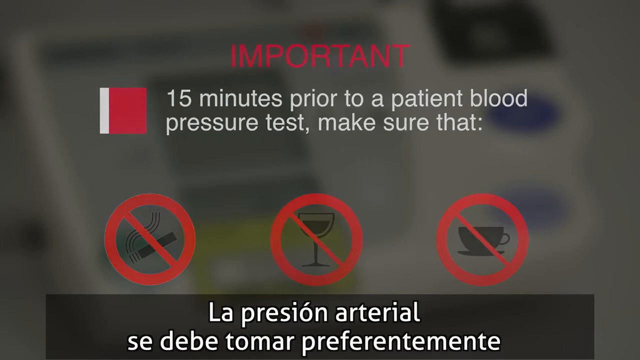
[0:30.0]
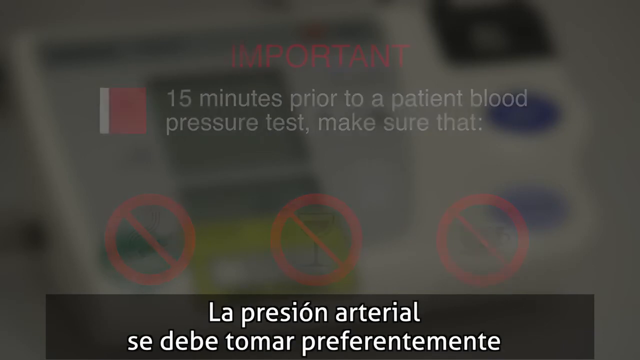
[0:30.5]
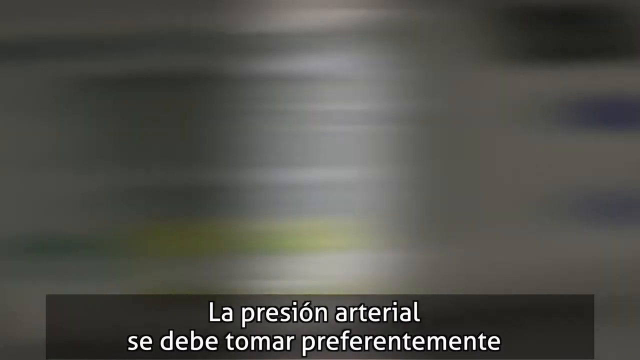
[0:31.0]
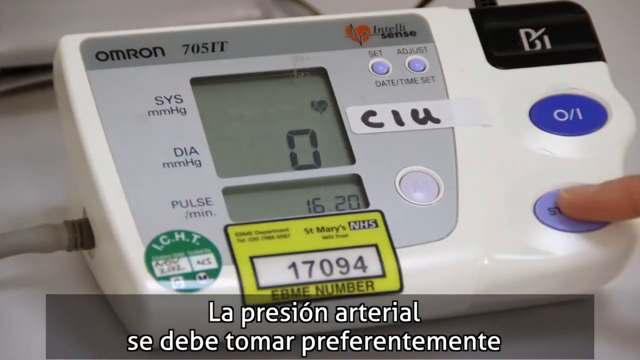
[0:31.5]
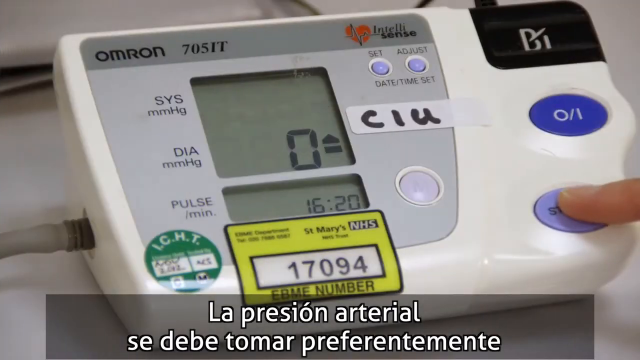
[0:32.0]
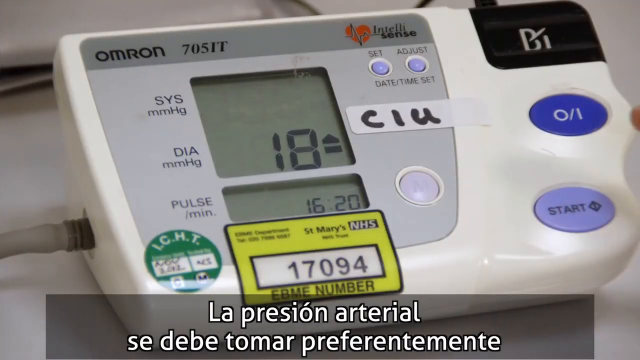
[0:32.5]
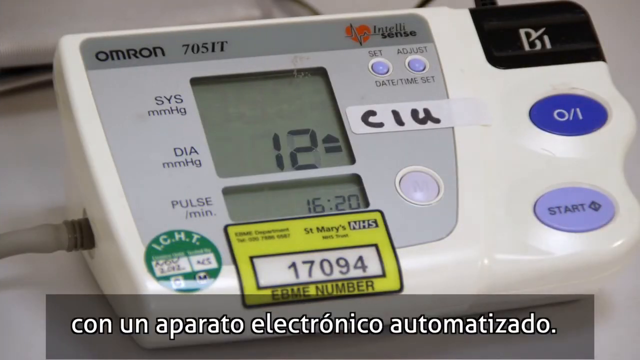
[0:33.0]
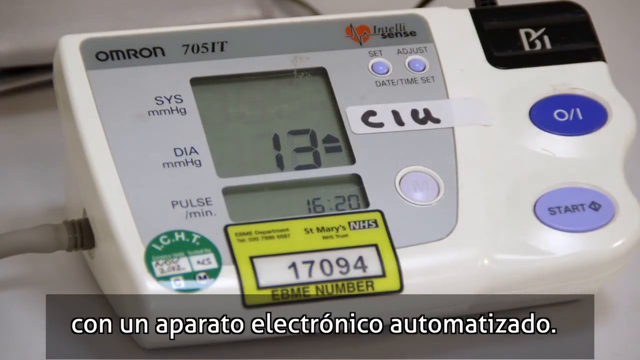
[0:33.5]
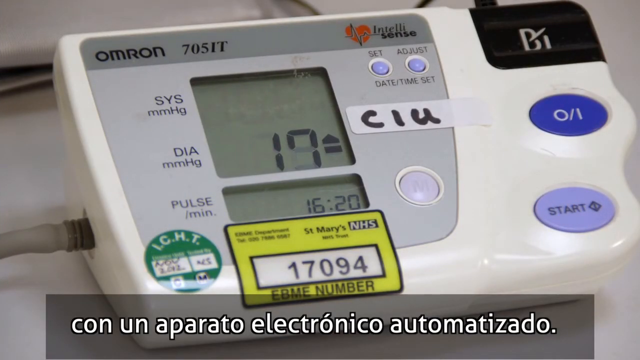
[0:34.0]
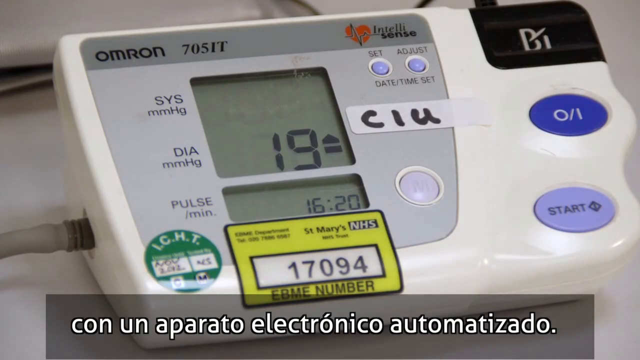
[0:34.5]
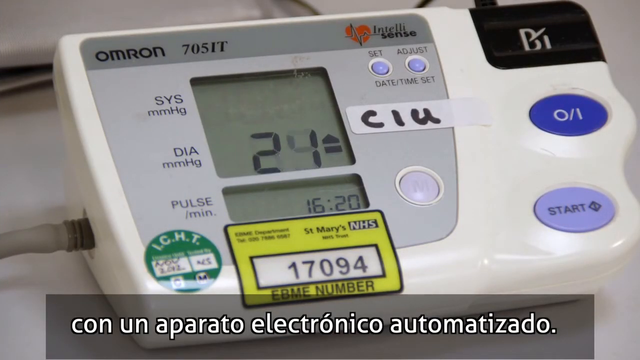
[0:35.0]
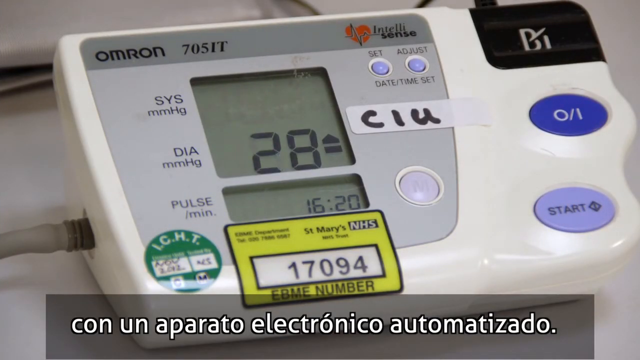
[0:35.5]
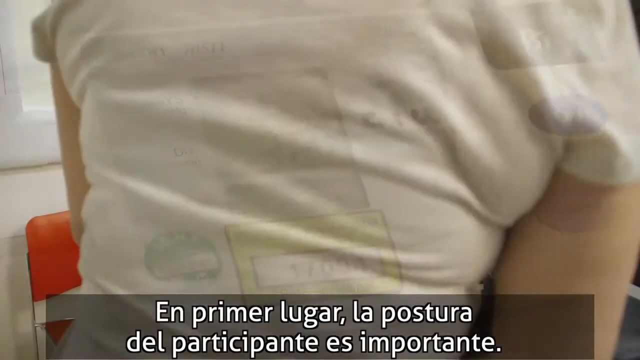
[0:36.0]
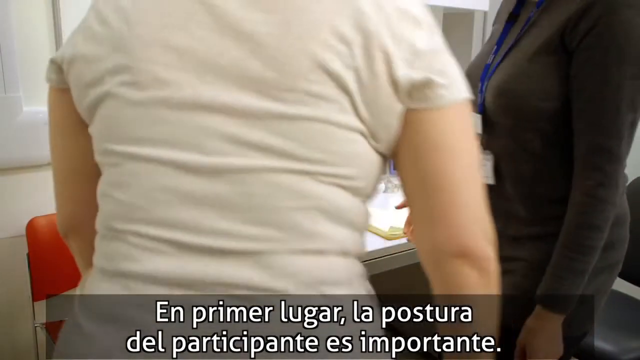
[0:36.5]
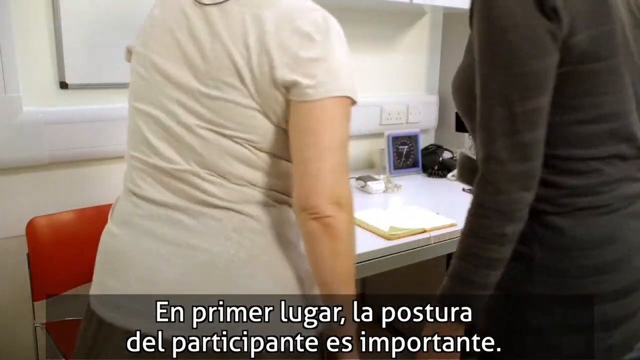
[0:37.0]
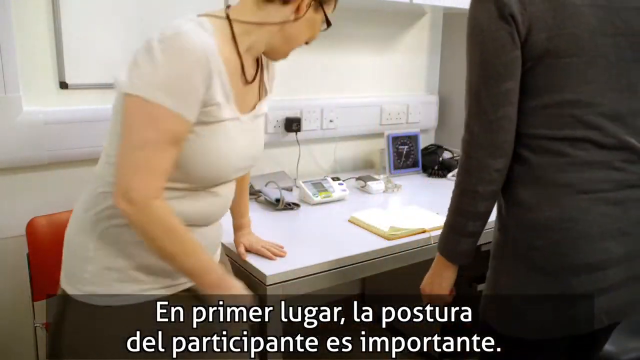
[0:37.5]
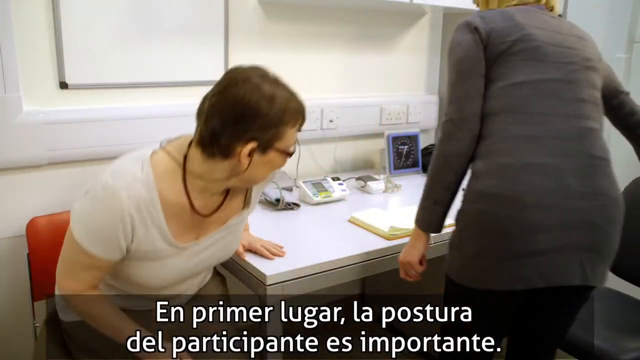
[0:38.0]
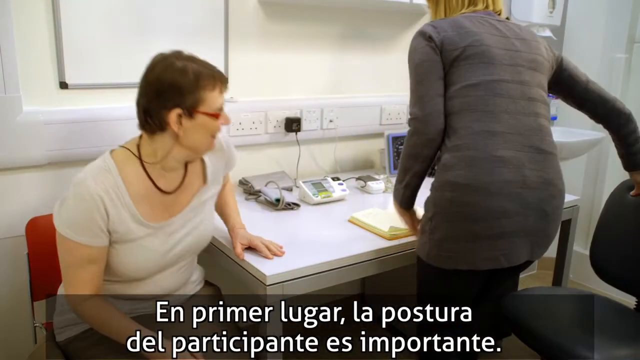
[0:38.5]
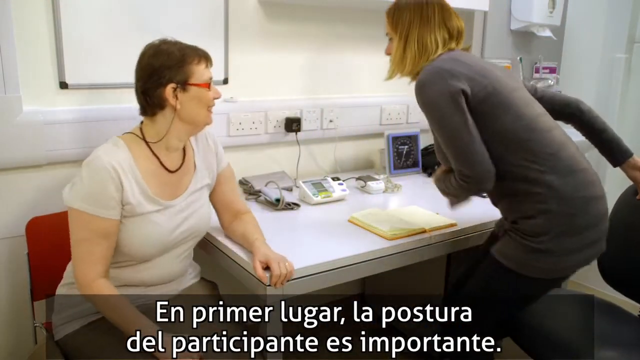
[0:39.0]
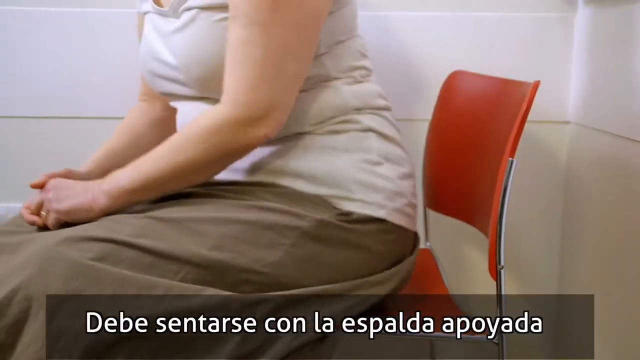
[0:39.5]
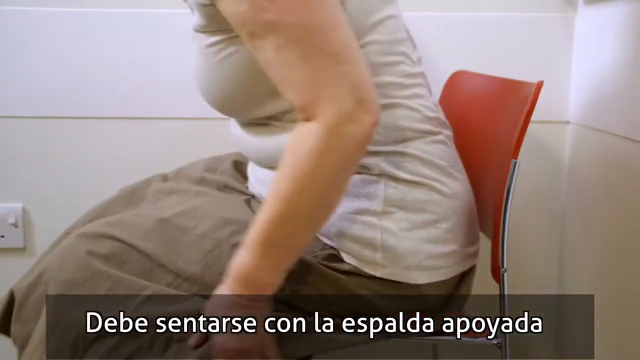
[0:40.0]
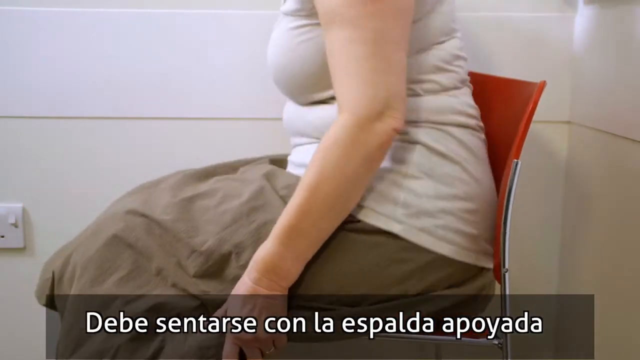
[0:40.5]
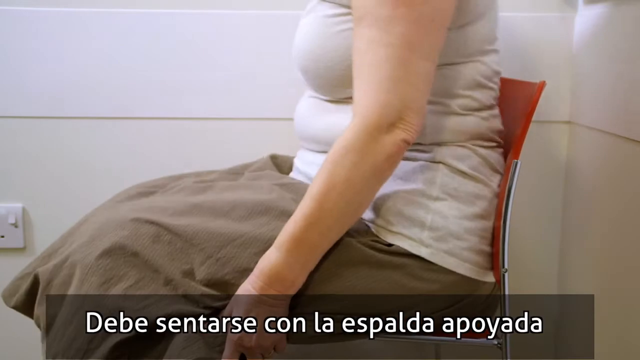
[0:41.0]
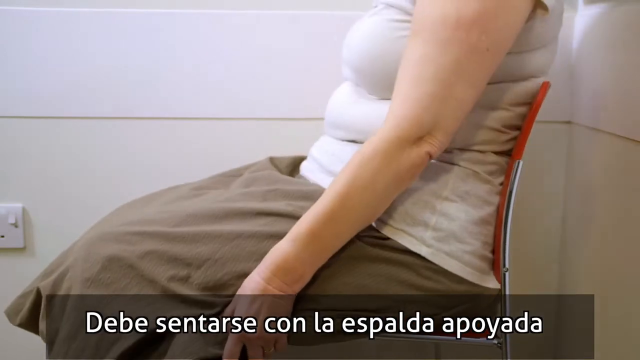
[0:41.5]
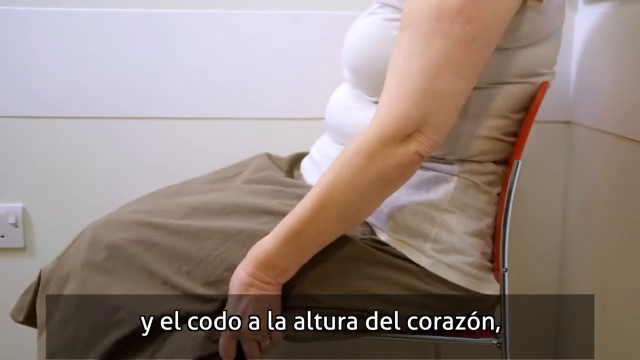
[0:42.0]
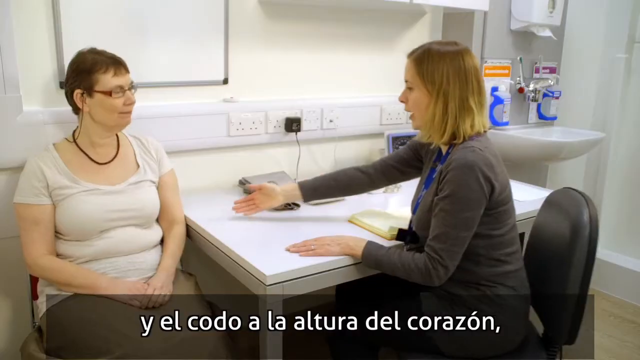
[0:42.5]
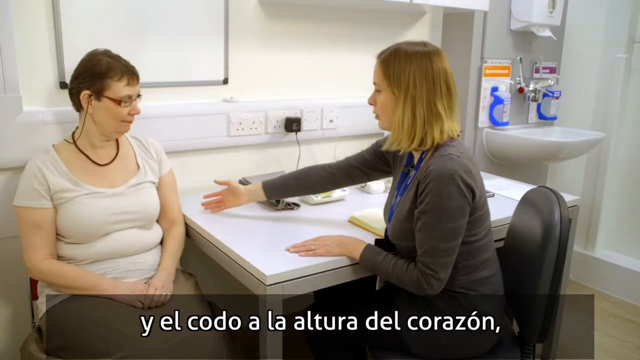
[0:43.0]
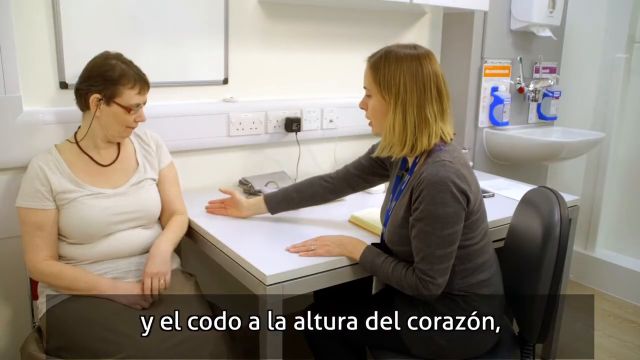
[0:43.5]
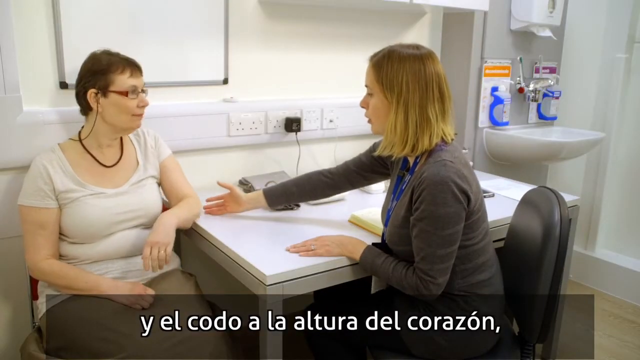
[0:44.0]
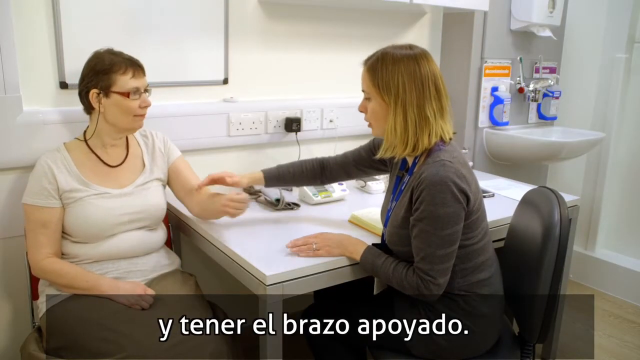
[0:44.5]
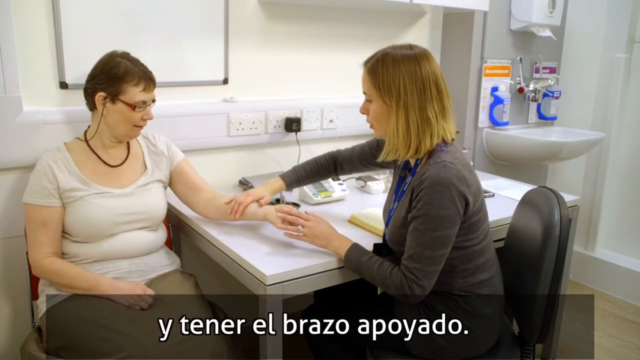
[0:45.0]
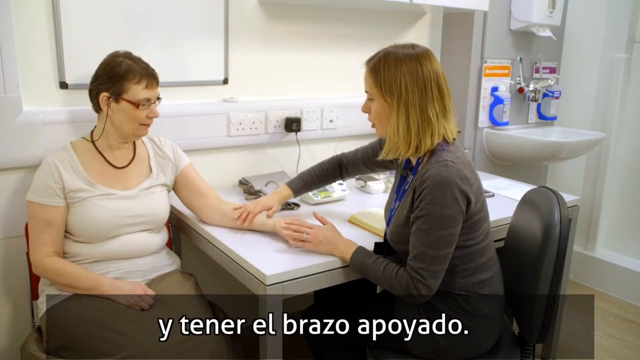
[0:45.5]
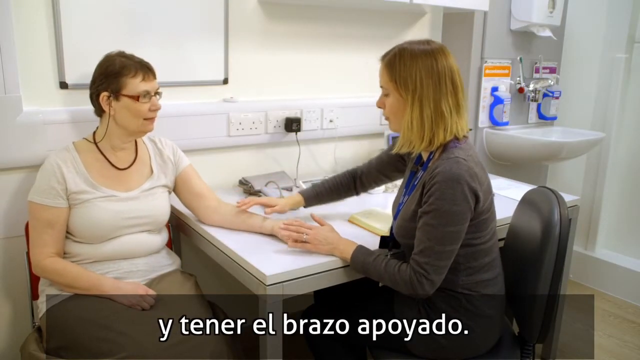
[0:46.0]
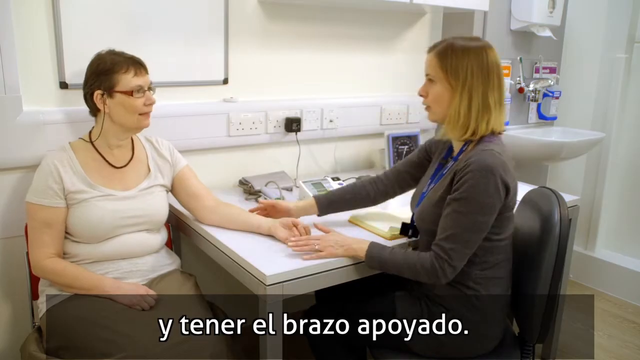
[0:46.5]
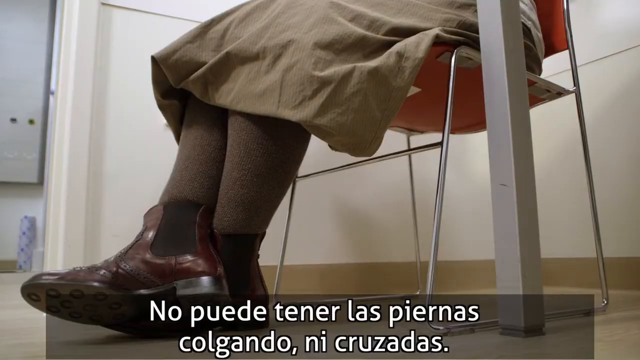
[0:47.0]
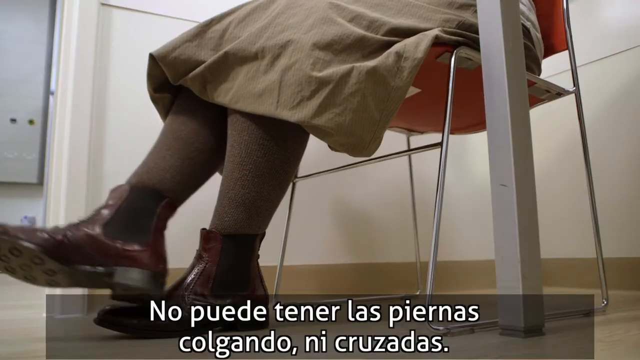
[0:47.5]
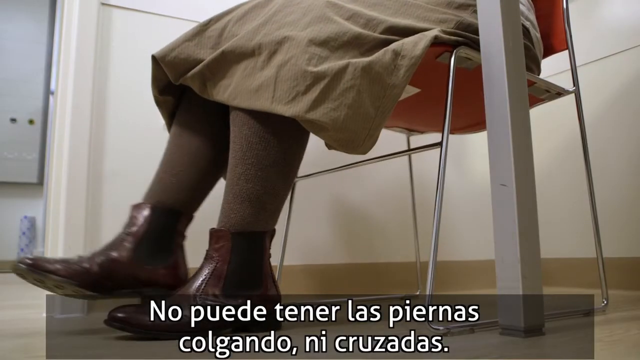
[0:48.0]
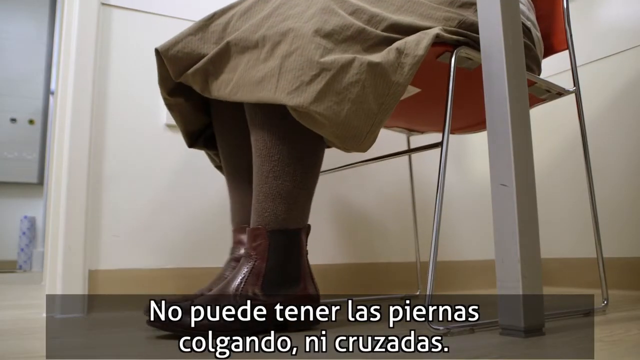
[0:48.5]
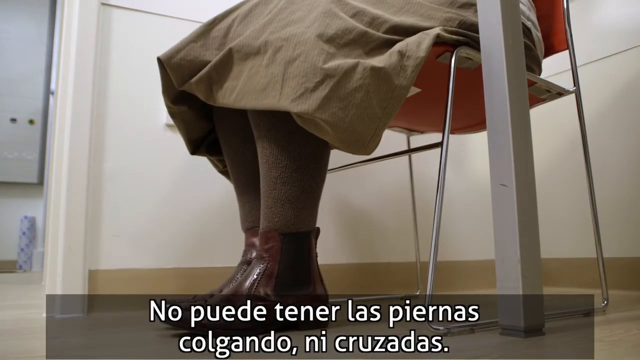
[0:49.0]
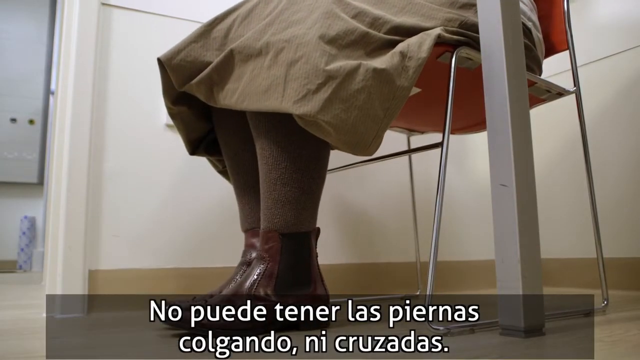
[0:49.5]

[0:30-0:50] A screen labeled "important" indicates no smoking, drinking alcohol or drinking coffee 15 minutes prior to a patient blood pressure test, showing three circles: one over a cigarette, one over a wine glass and one over a coffee cup. A button labeled "start" is pushed and a number goes up. A person sits down in a chair with their back pushed back, resting. The person's arm is put up on the table, and the person uncrosses their legs. Captions at the bottom are in Spanish.